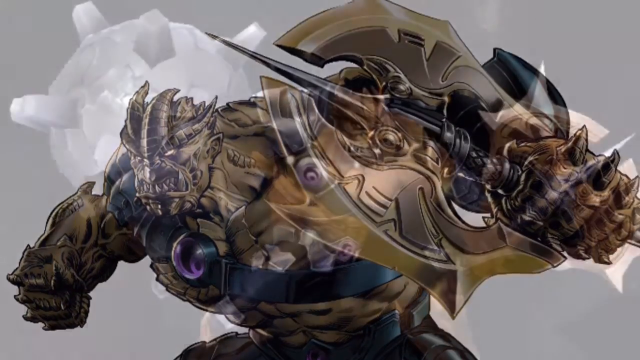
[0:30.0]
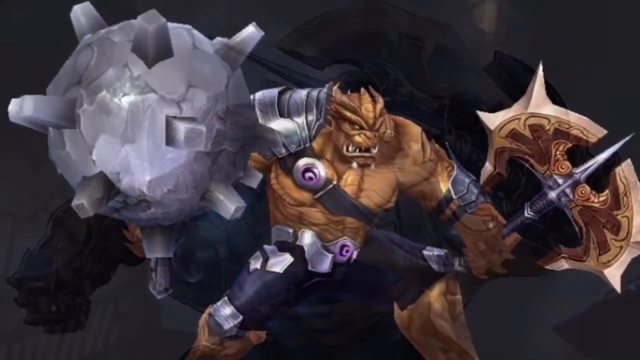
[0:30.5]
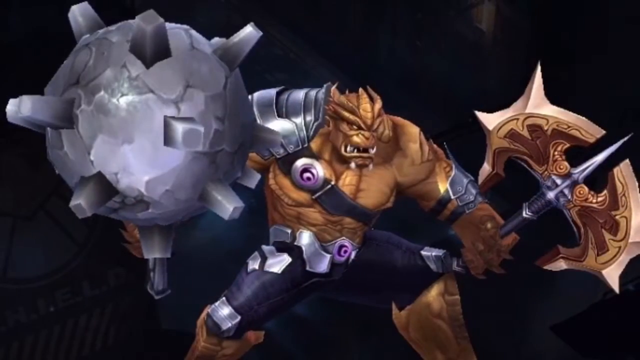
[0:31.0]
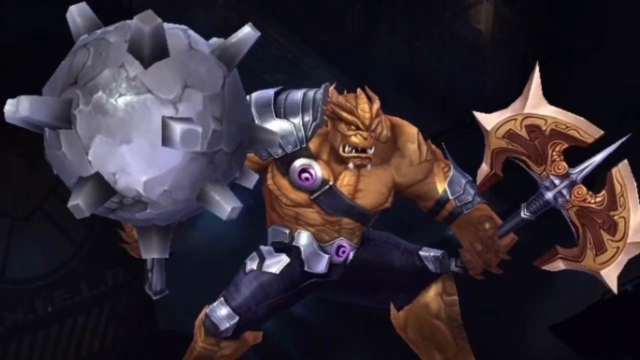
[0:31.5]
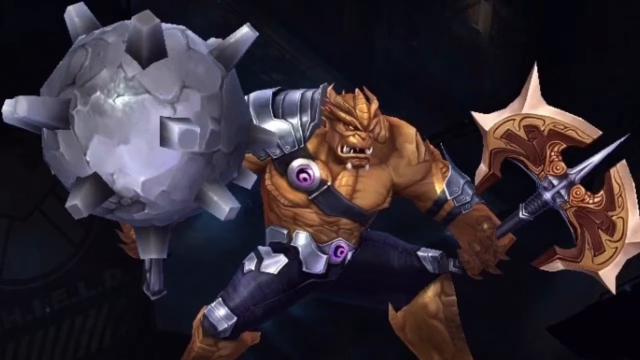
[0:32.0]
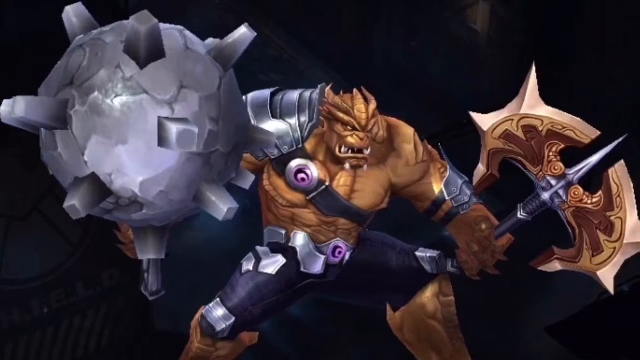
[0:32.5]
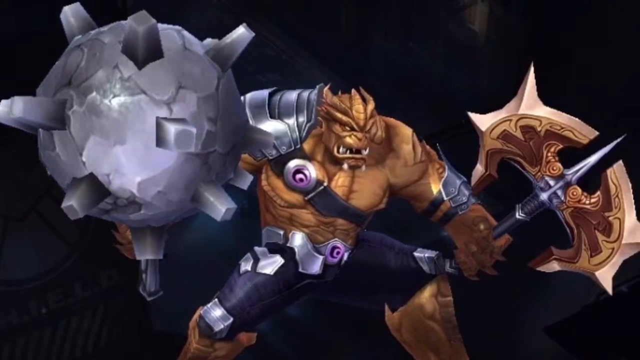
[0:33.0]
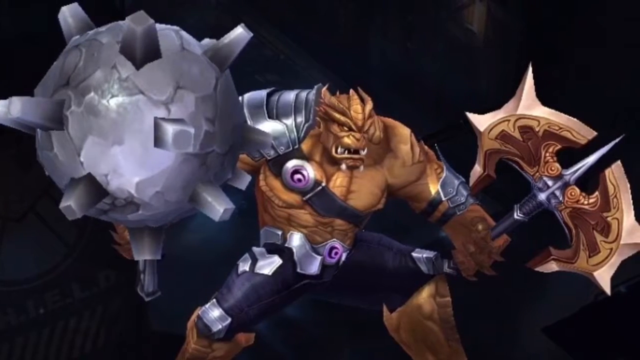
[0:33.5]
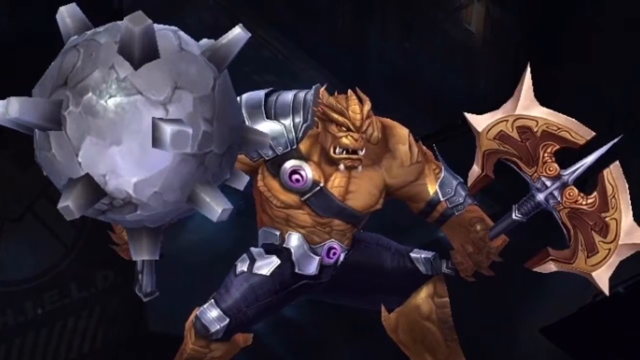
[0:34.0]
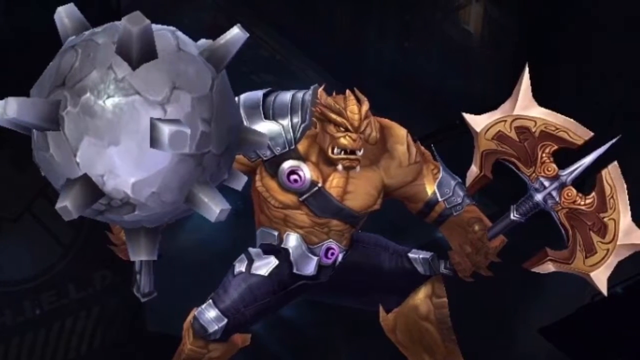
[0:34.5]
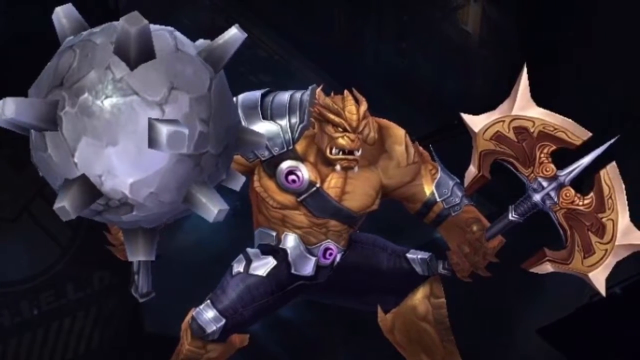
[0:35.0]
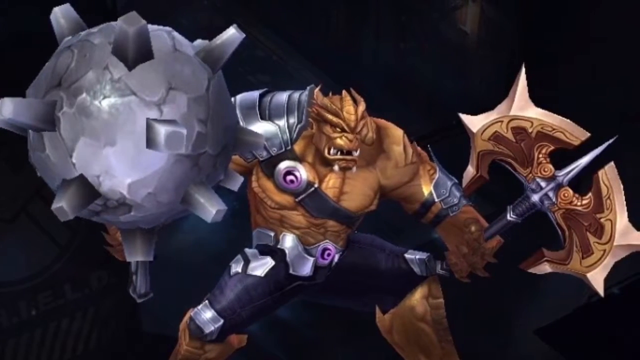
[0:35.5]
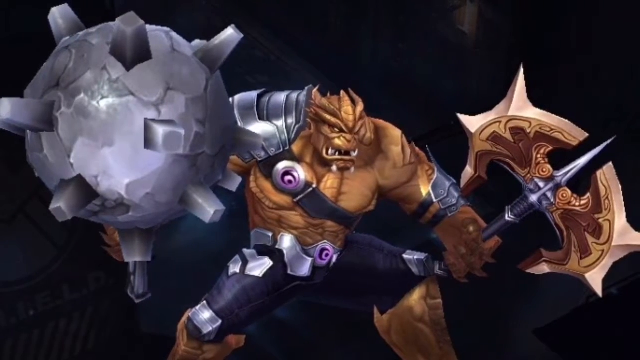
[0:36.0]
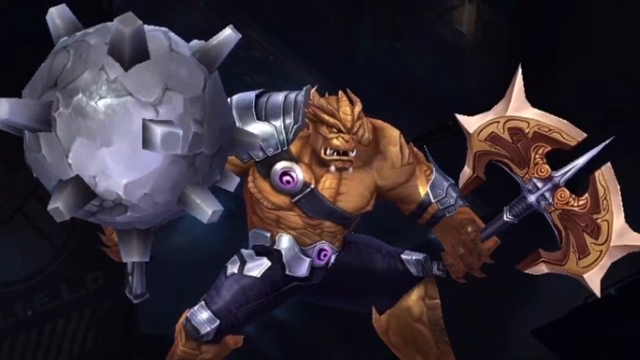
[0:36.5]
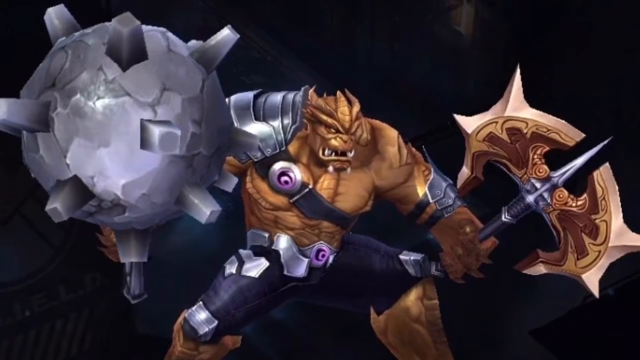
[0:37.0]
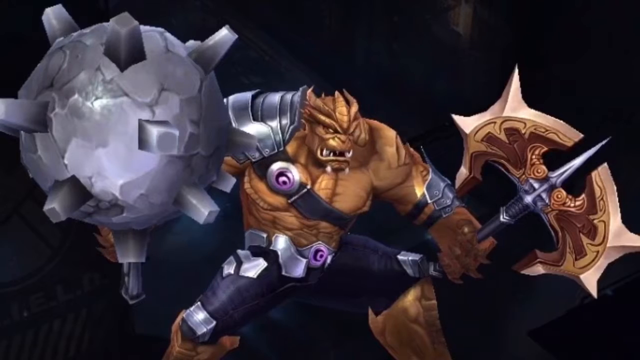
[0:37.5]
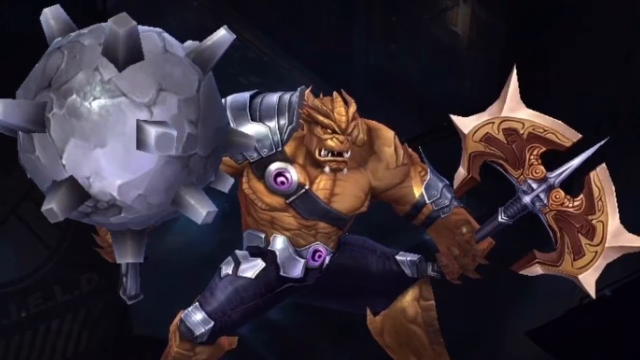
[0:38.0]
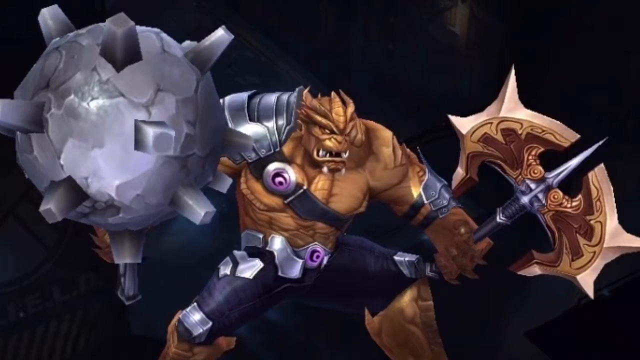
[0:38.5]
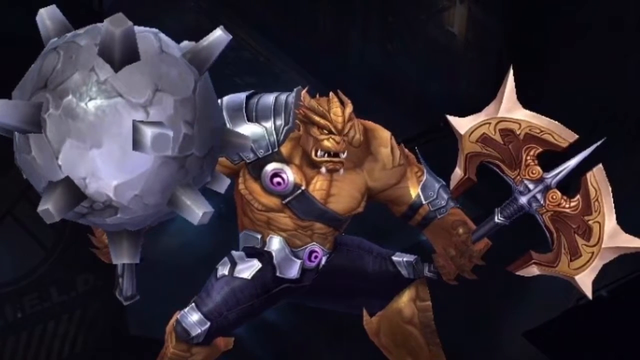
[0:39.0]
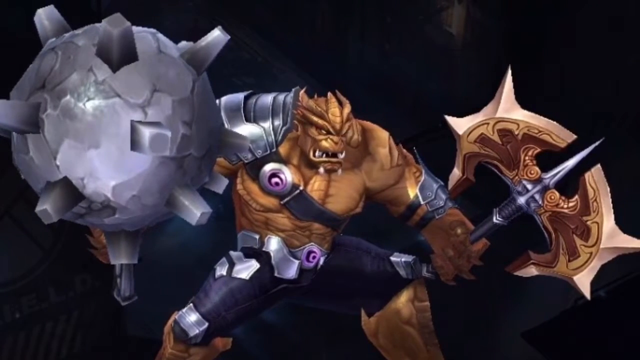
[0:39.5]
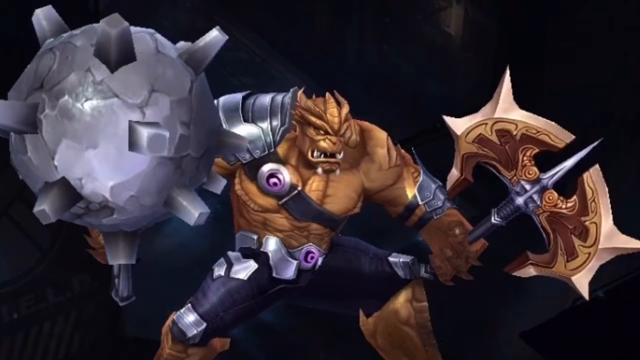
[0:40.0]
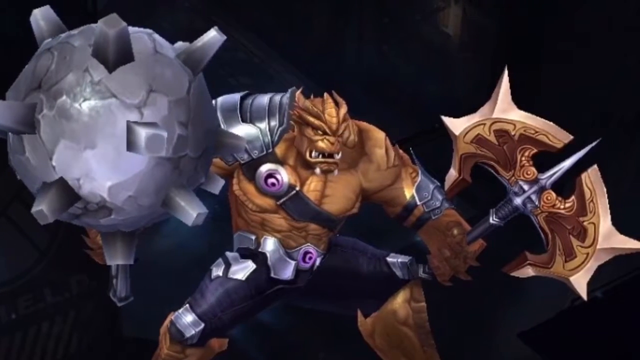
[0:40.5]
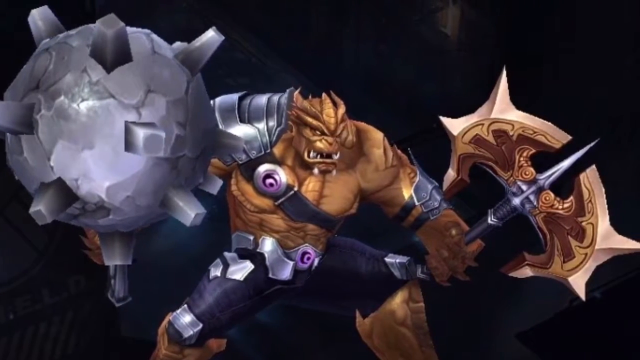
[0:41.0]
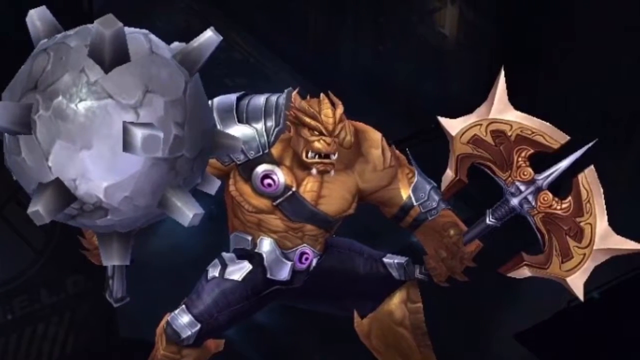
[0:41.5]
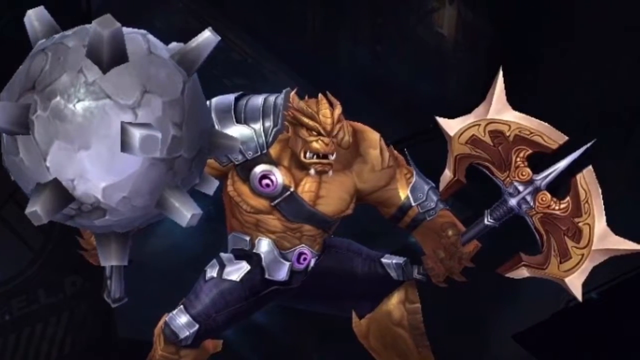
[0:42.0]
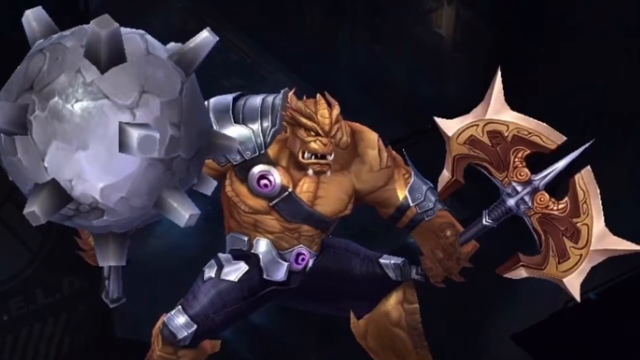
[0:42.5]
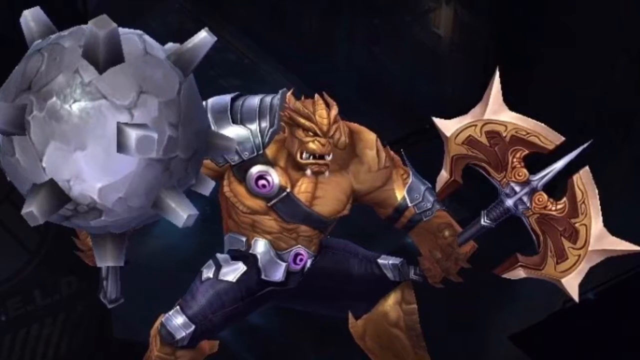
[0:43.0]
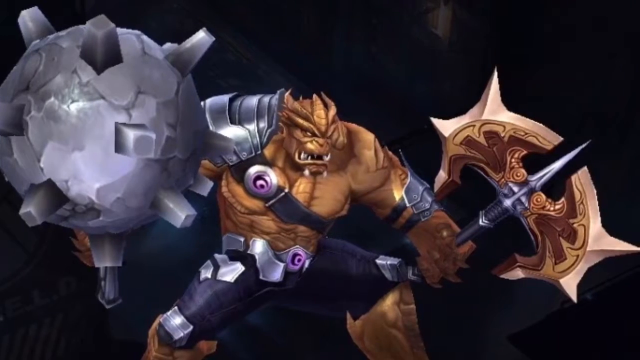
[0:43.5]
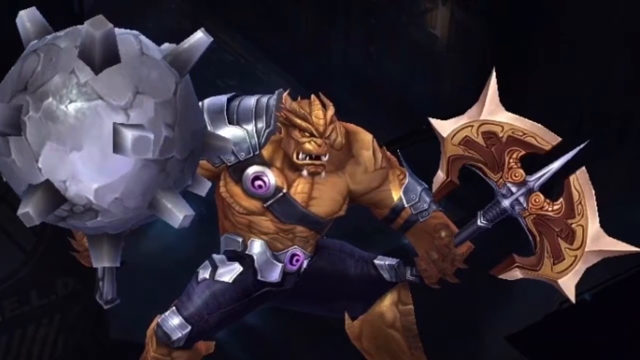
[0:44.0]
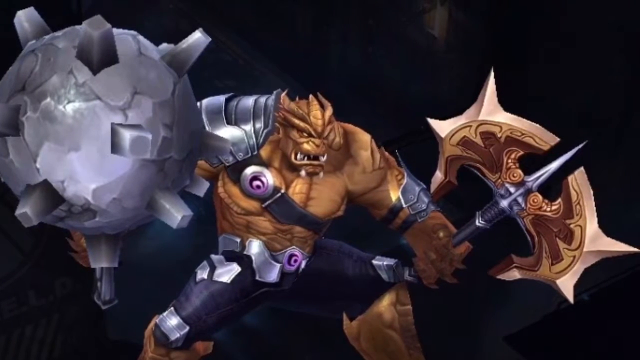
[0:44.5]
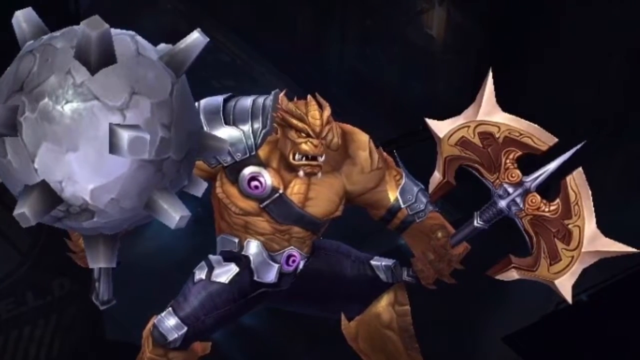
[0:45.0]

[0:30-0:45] An evil monster from the video game is shown as the image transitions to another item visible in the upper left corner of the background. At first it is white, like a sphere with some squared knobs pointing off it, positioned right over the monster's head as one image transitions into the other. When the transition completes, the circular part turns out to be a weapon on the end of the monster's hand. The monster is in the middle, his body facing forward and his head facing toward the right. His shoulder on the left side is covered in metal armor, and his body is a golden orange color. The background is completely black. In his right hand he holds a weapon that looks like a spike with an axe on both sides, his hand clenched tightly around it. He wears dark purple pants with some metal pieces on them. His mouth is slightly open, with very sharp teeth sticking out, and the inside of his mouth is pitch black. There is more armor on the side of his right arm where the bicep would be. The view slowly scrolls slightly to the right the entire time, giving a good look at him.